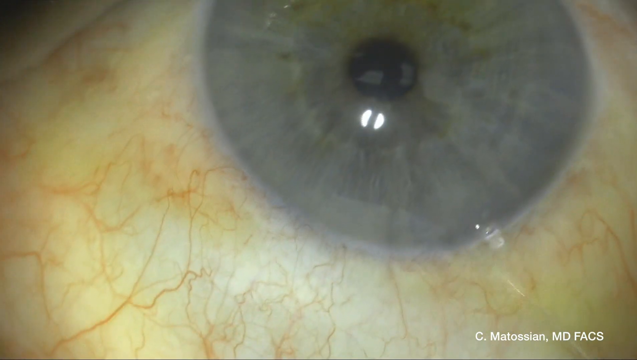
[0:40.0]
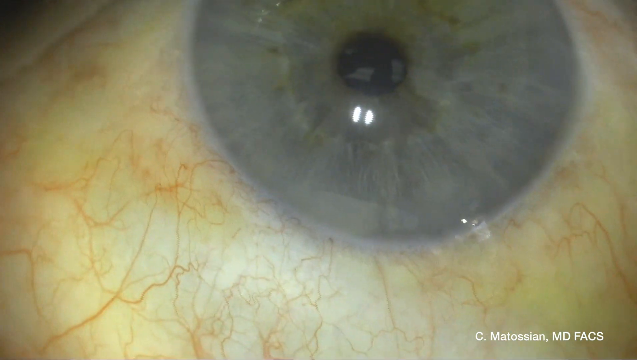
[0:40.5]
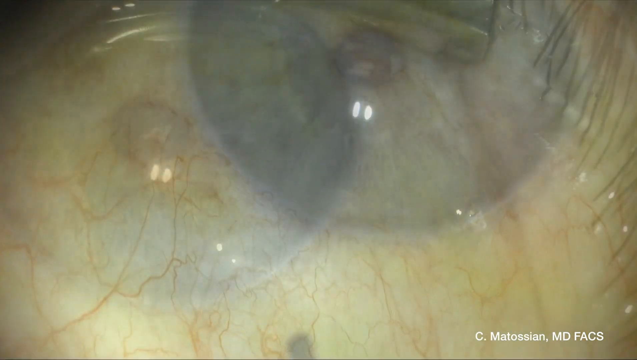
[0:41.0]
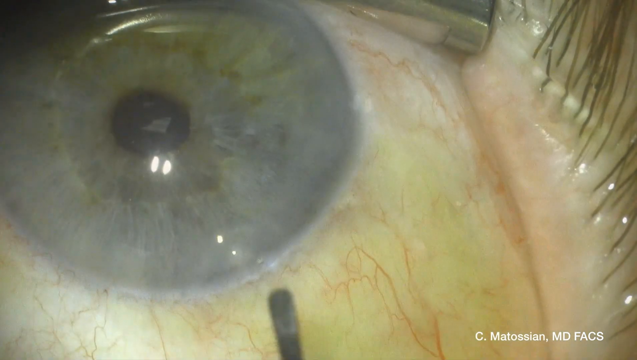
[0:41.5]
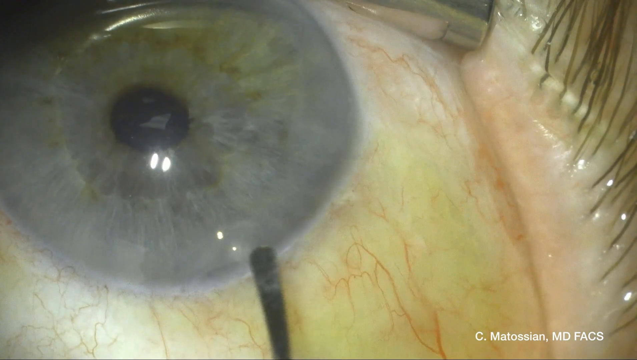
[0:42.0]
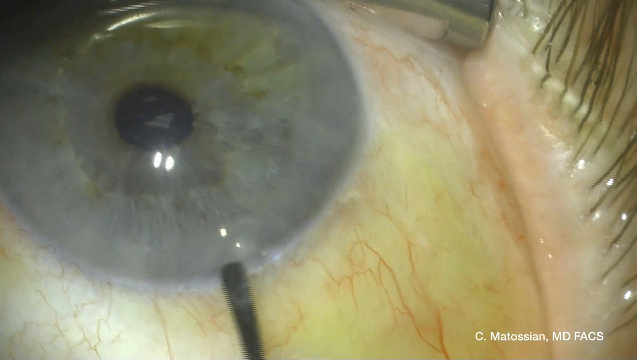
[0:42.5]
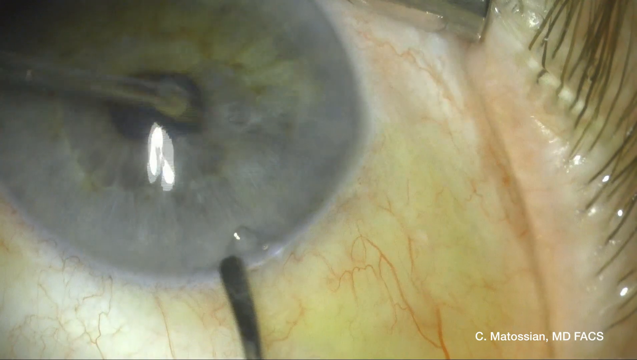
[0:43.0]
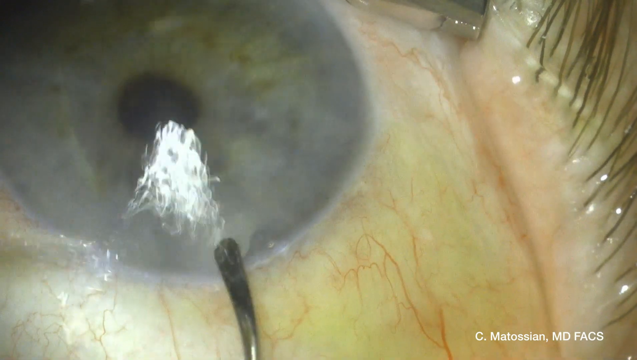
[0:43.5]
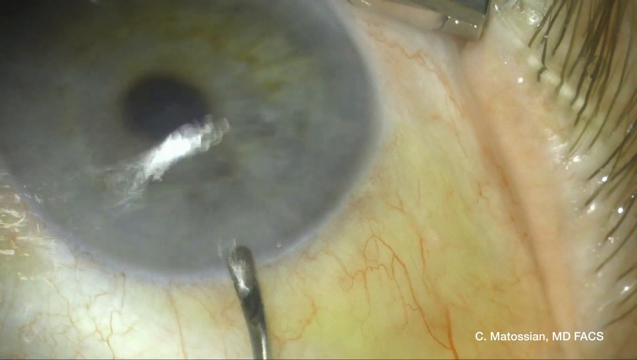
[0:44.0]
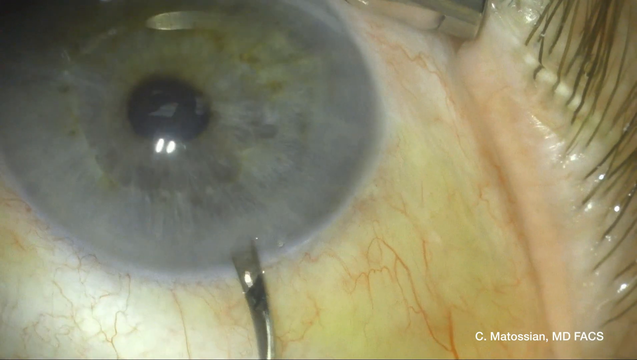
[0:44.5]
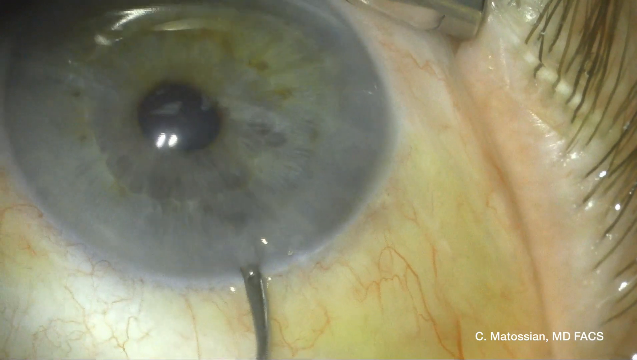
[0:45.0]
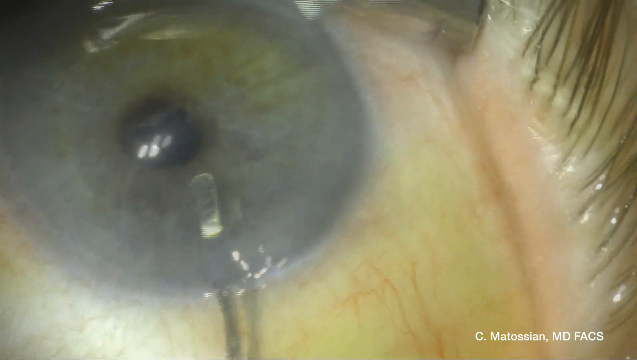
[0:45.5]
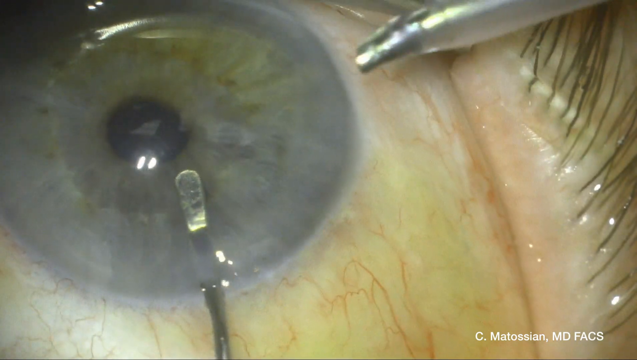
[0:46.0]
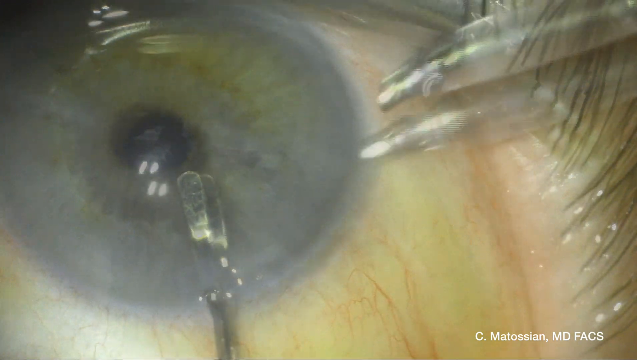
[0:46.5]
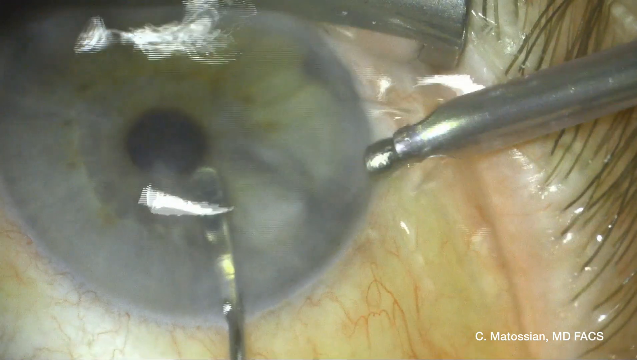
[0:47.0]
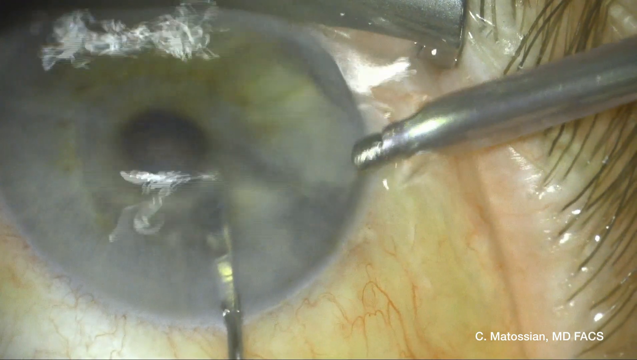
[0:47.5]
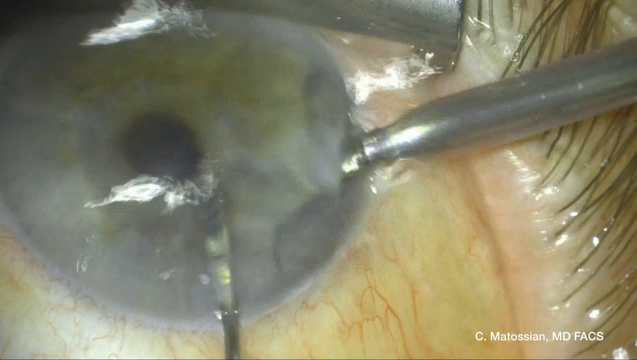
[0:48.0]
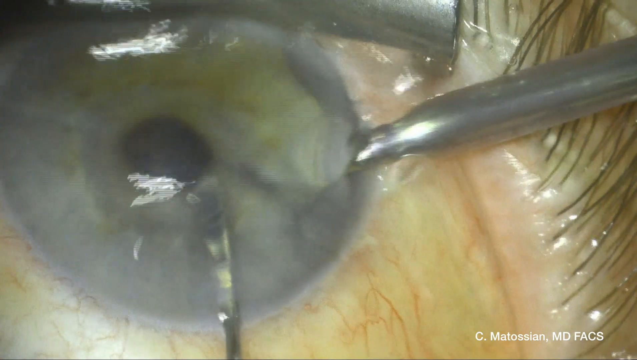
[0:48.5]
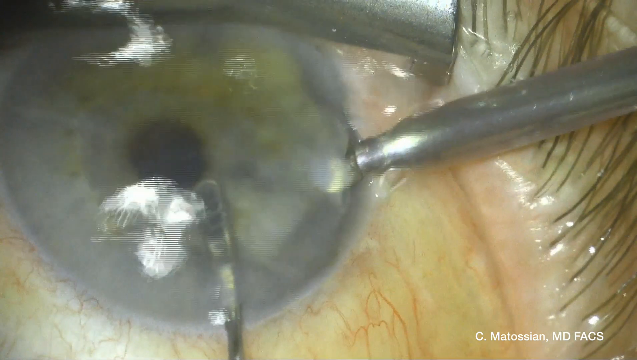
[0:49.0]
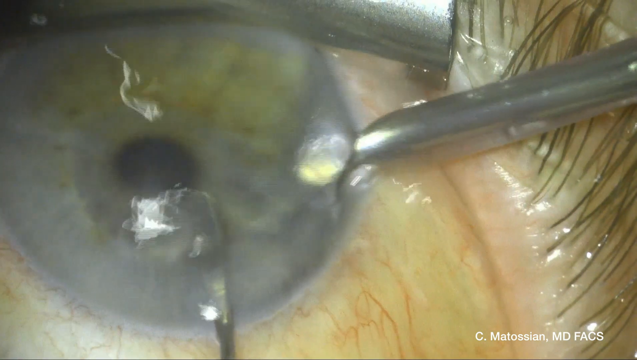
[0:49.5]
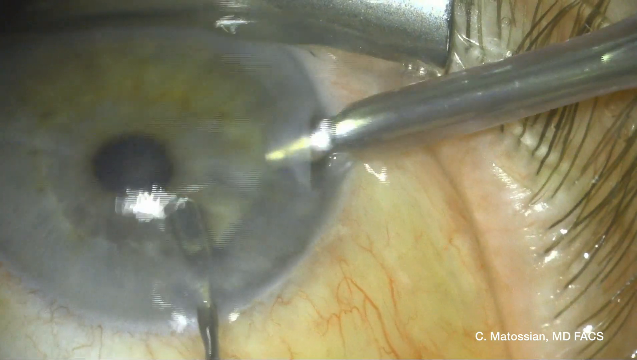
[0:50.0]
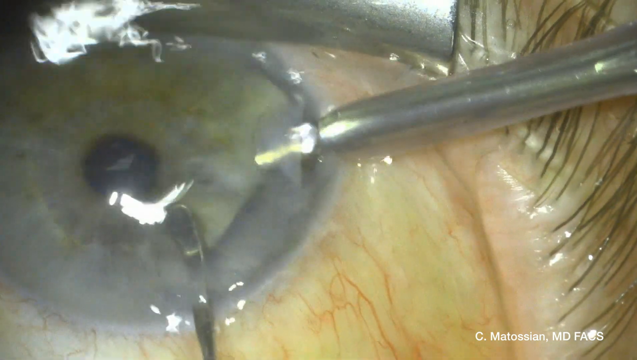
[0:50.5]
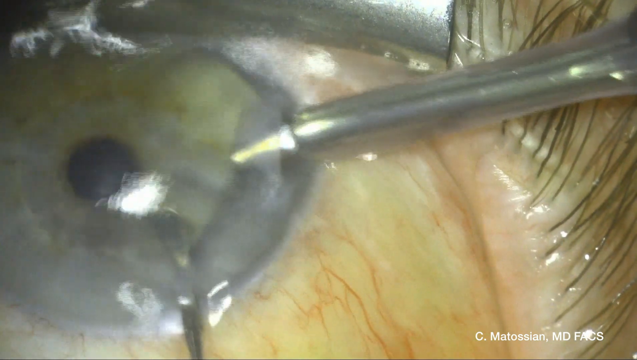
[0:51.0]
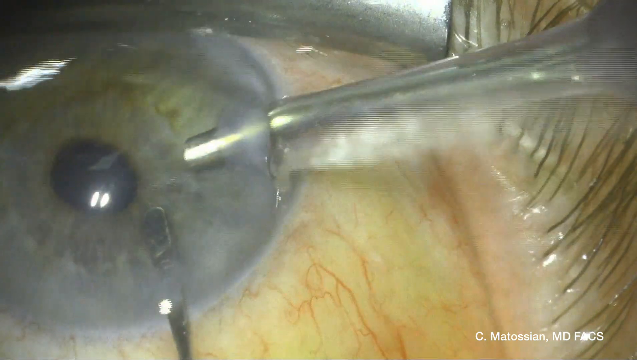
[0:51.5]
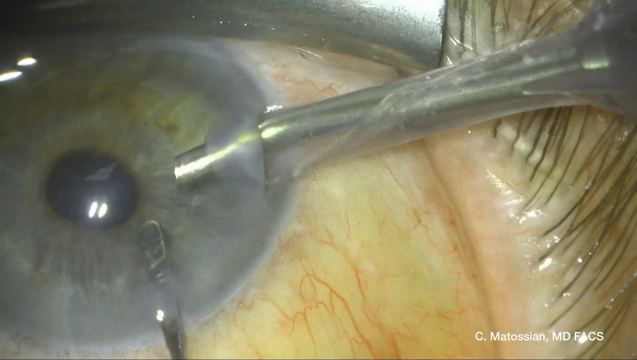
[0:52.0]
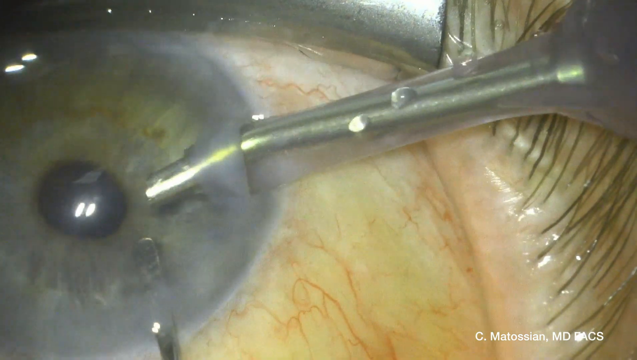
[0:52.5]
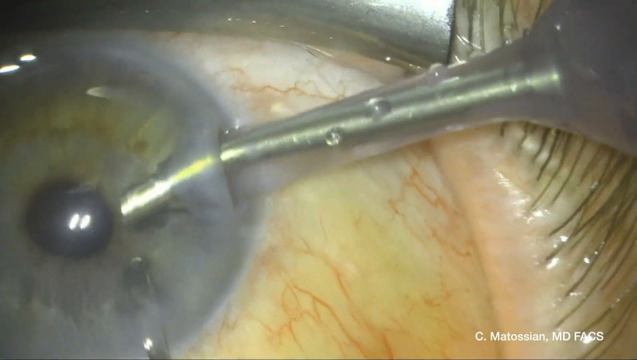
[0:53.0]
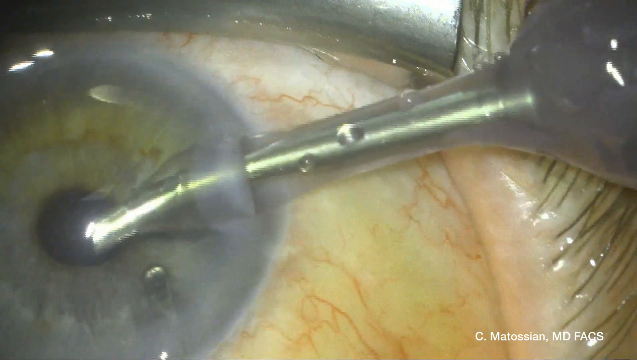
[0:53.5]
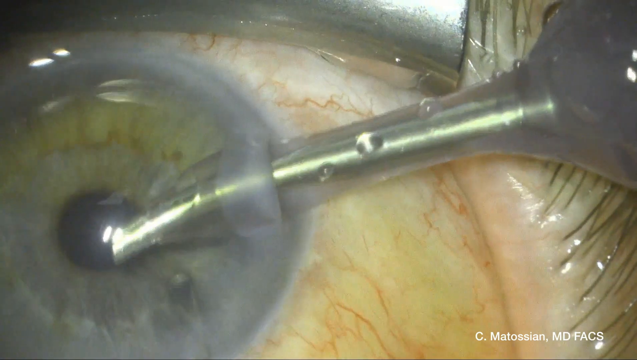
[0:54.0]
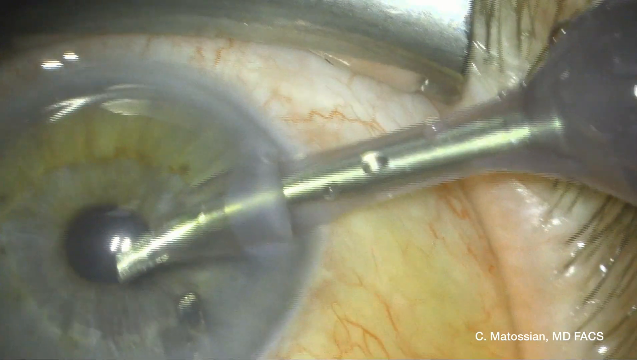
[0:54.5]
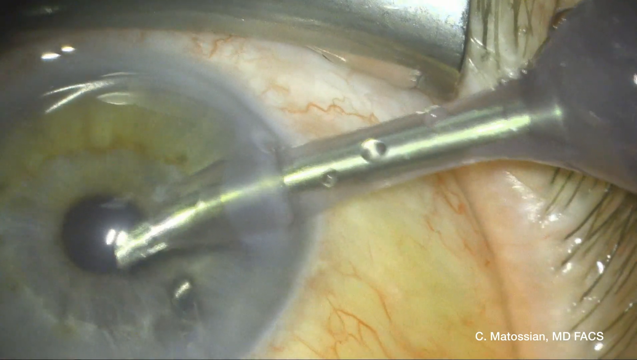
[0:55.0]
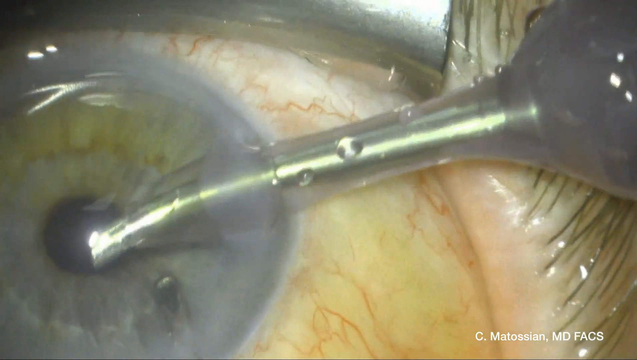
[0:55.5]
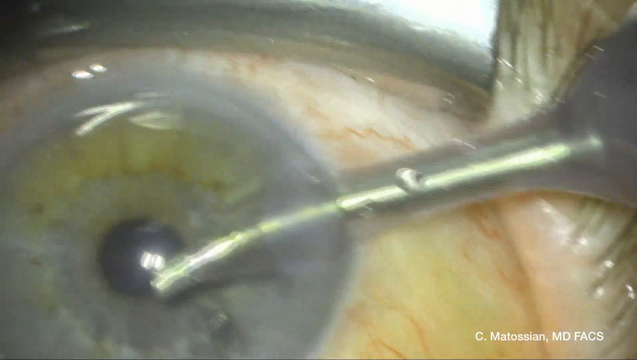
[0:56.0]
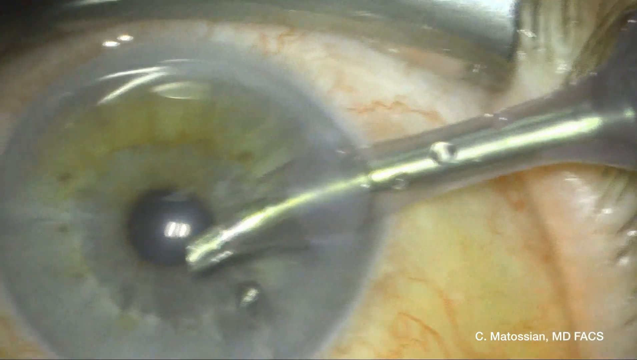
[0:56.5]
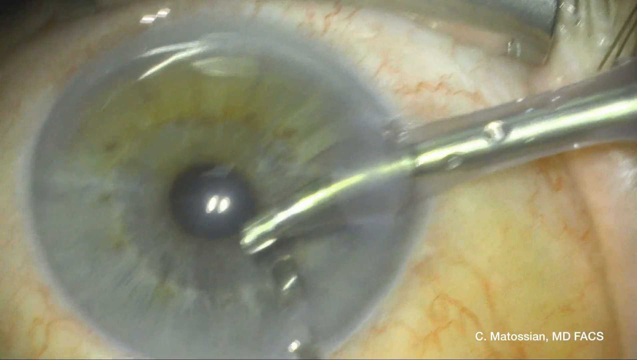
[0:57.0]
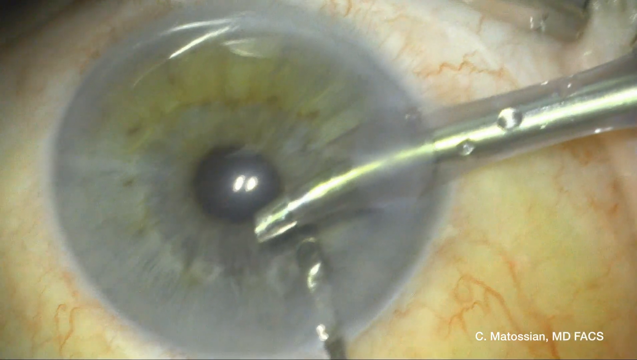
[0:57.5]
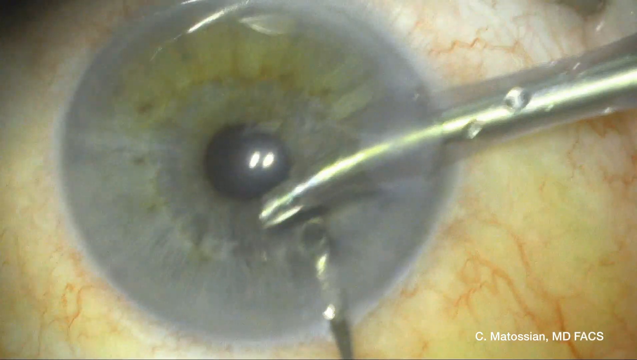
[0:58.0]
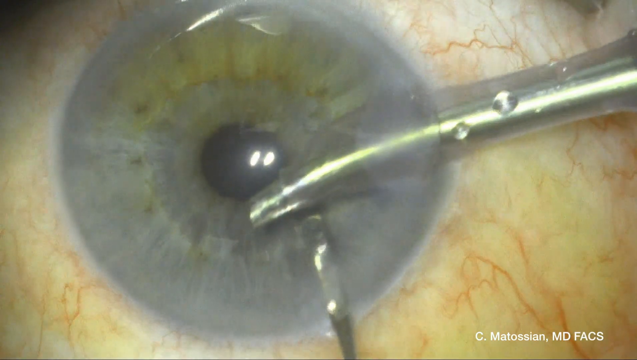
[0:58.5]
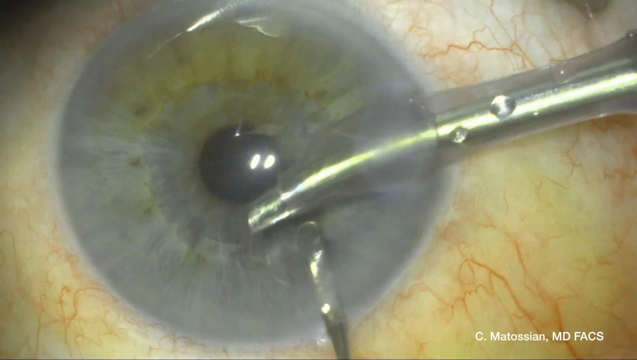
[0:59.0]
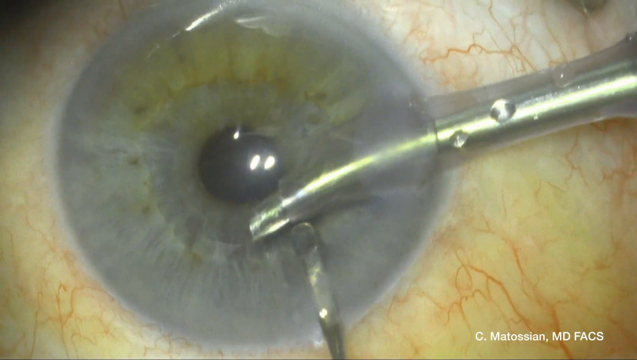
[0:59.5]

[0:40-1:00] A close-up shows an eye with a blue iris and red veins running through the white parts, viewed from a lower left position. The video fades out and fades back in to another angle, this time viewing the eye from a lower right position. The iris is blue and there are red veins in the white parts. On the right side the eyelashes are visible, some with liquid on them. In the upper right corner a metallic piece holds the eyelid back. In the lower left part a black tool touches the blue part of the eye. Water is sprayed from the left side in a counterclockwise circular motion onto the blue part of the eye as the tool is inserted under the eye, through it and back out. The view shifts so that there is a long metallic tube on the right side. The view shifts again and the metallic tube sprays water leftward over the eye. As it continues spraying water, the tube is inserted under the blue part of the eye. Water flies out toward the right side of the eye as the tube pierces the eye and presses forward until it reaches from the right side of the frame into the black part of the eye. The tube intersects with the metal point at the bottom of the frame.